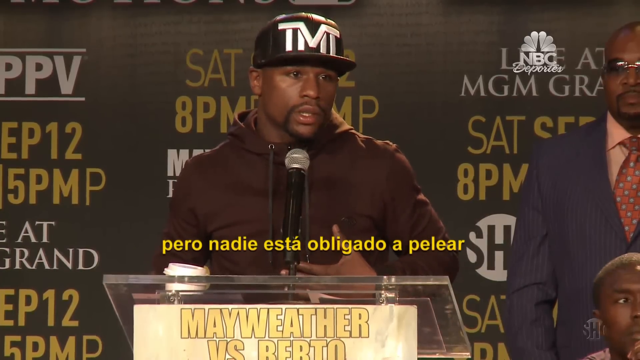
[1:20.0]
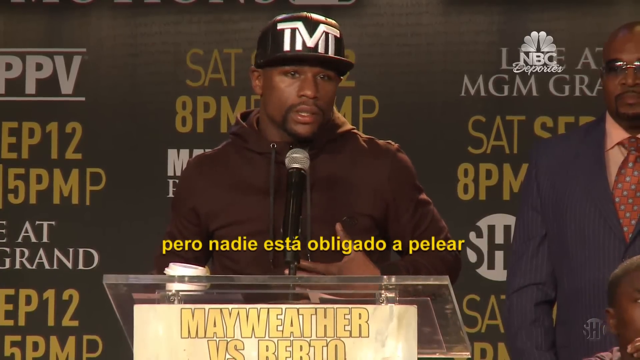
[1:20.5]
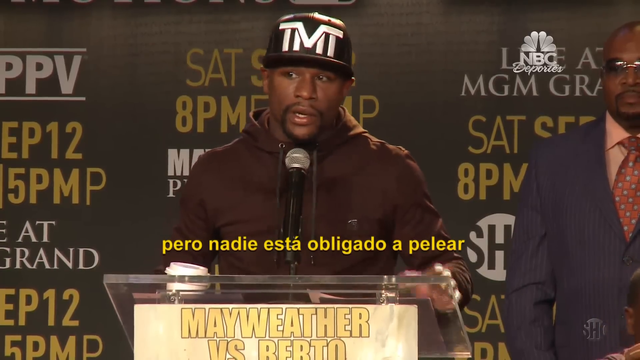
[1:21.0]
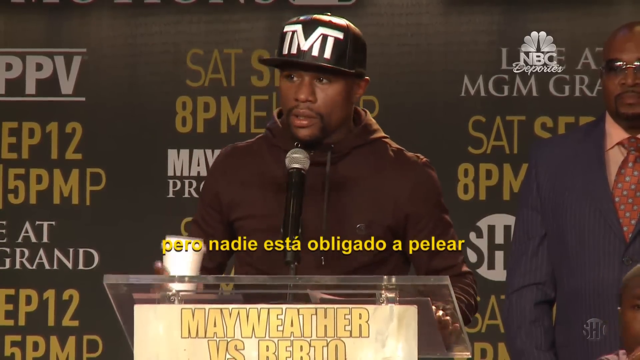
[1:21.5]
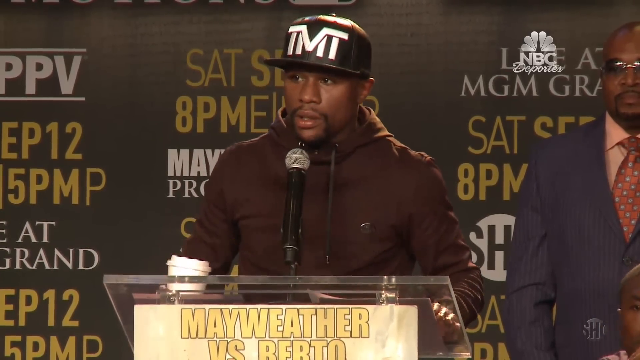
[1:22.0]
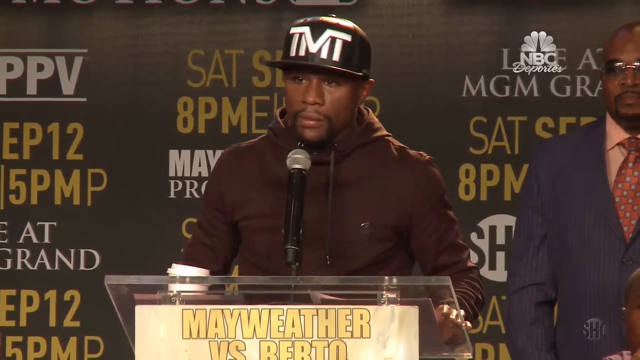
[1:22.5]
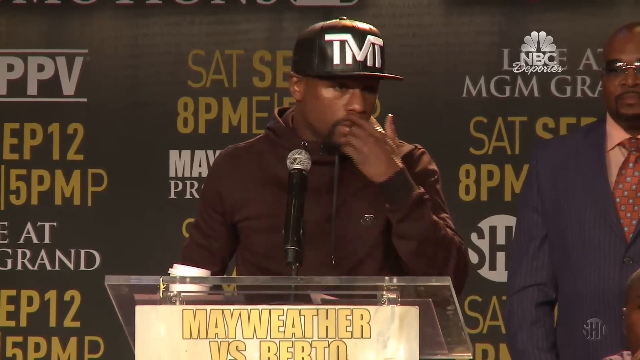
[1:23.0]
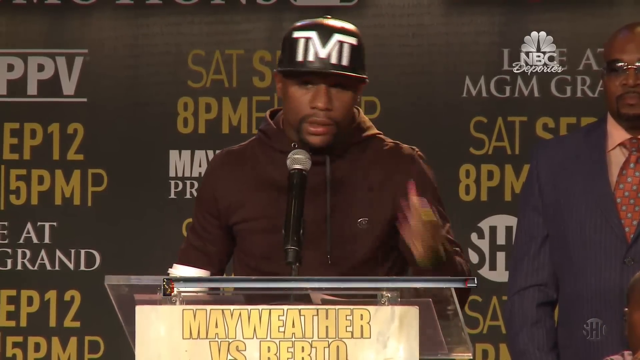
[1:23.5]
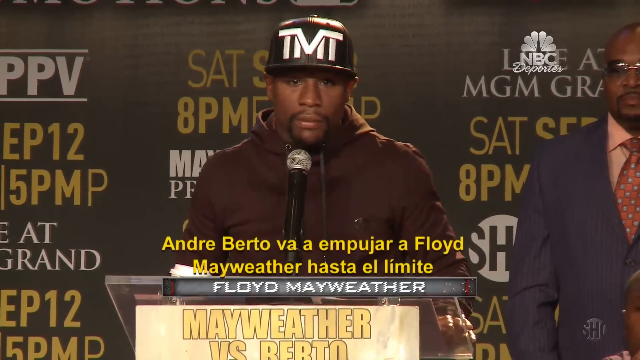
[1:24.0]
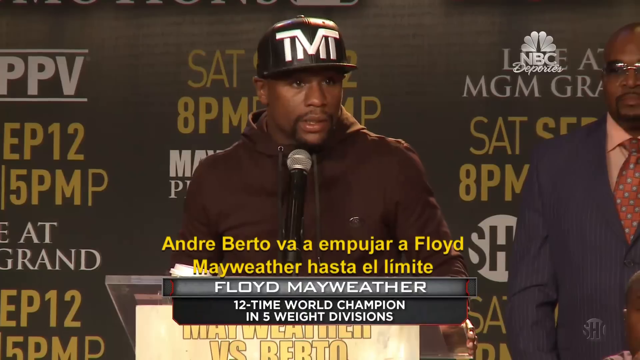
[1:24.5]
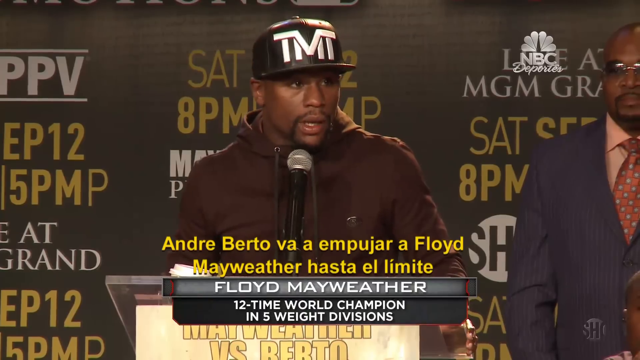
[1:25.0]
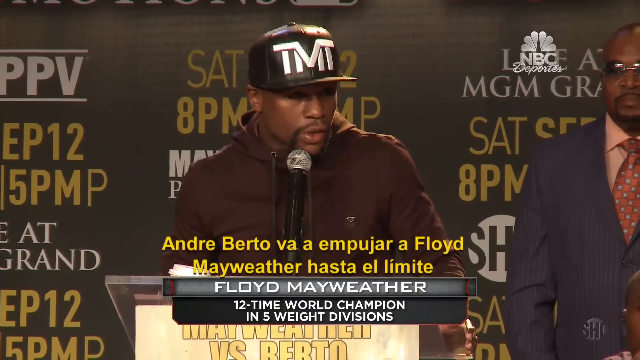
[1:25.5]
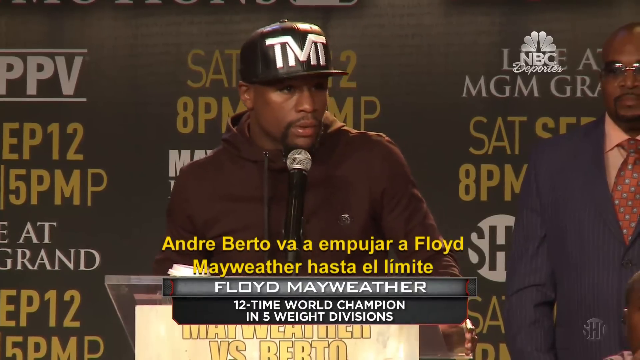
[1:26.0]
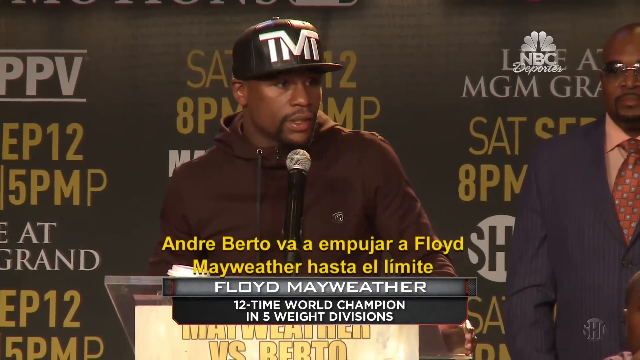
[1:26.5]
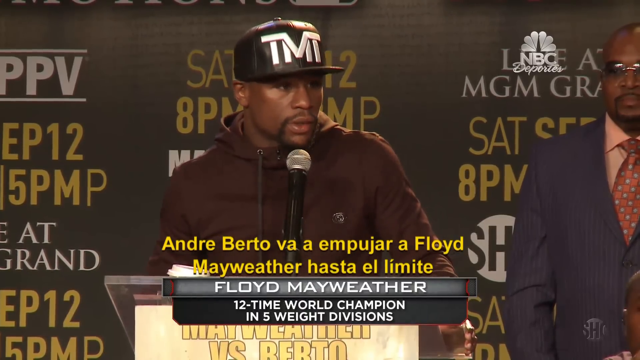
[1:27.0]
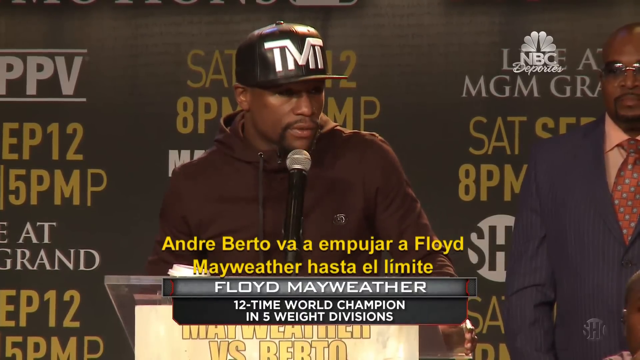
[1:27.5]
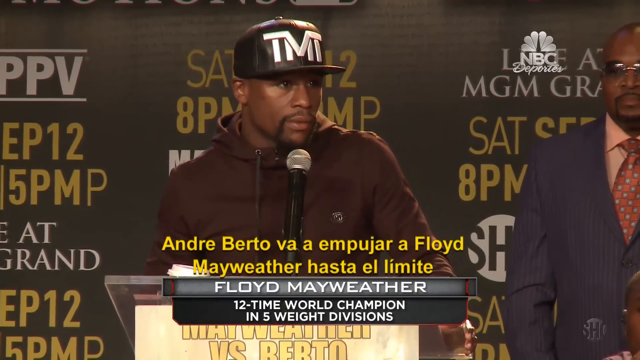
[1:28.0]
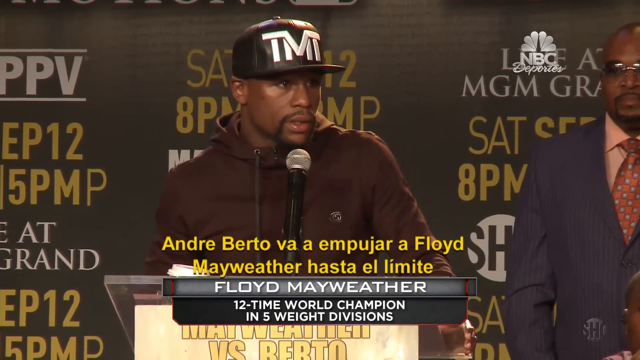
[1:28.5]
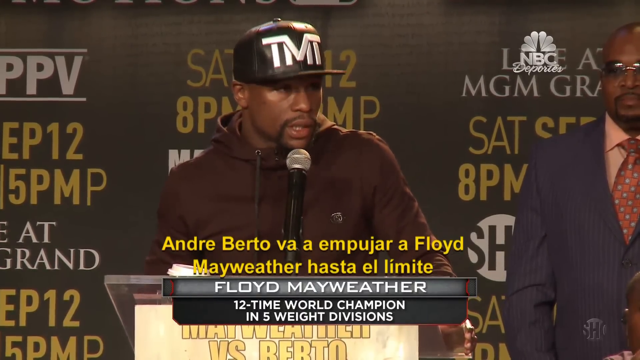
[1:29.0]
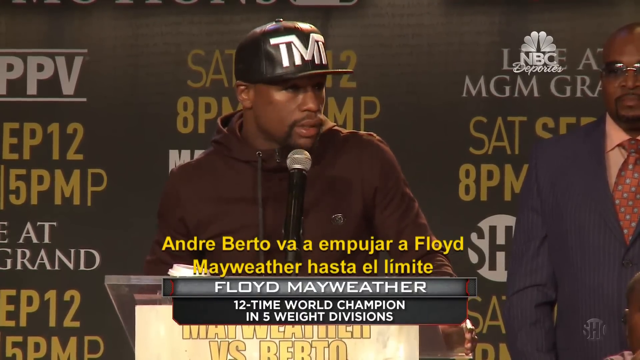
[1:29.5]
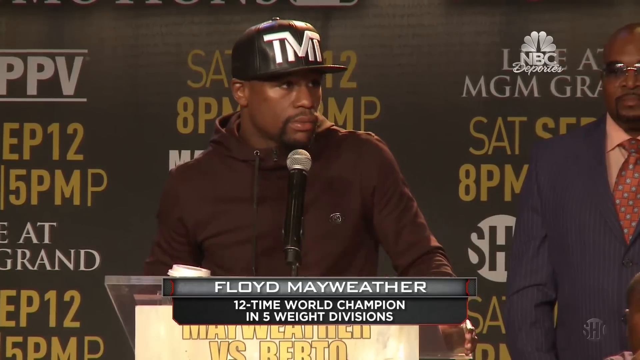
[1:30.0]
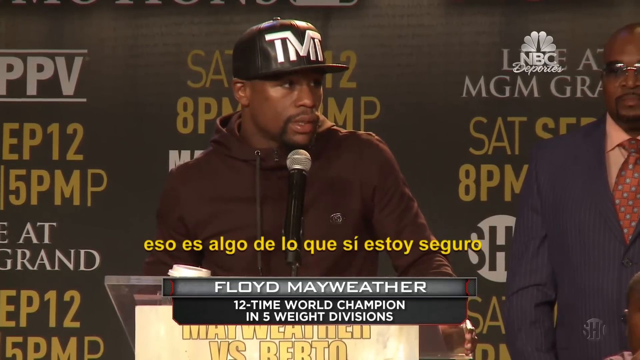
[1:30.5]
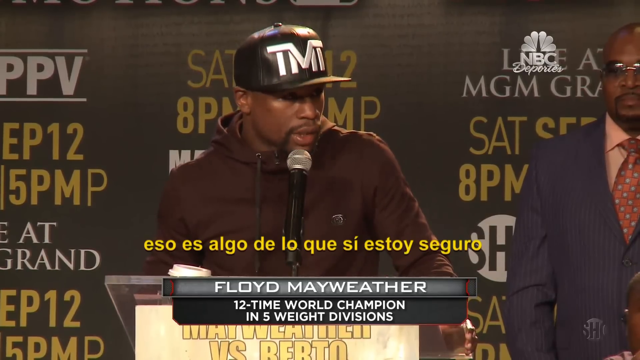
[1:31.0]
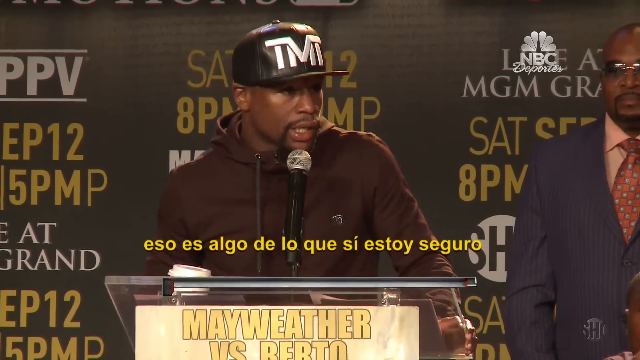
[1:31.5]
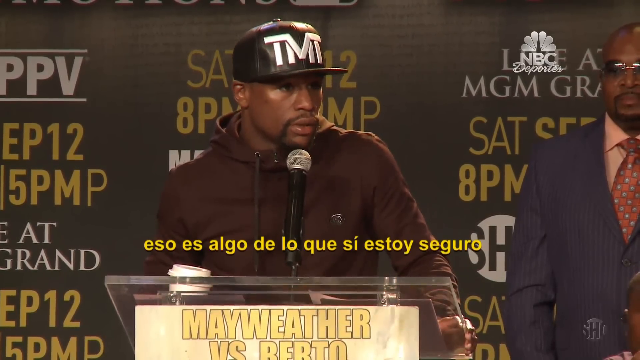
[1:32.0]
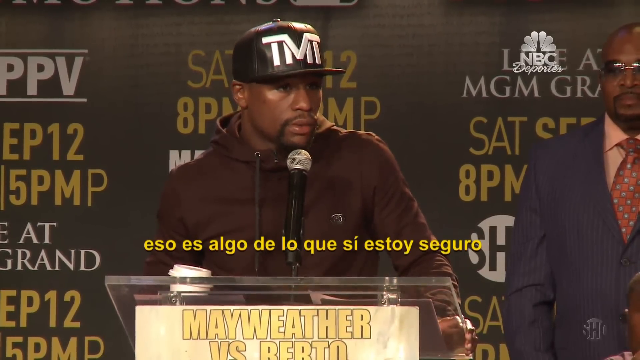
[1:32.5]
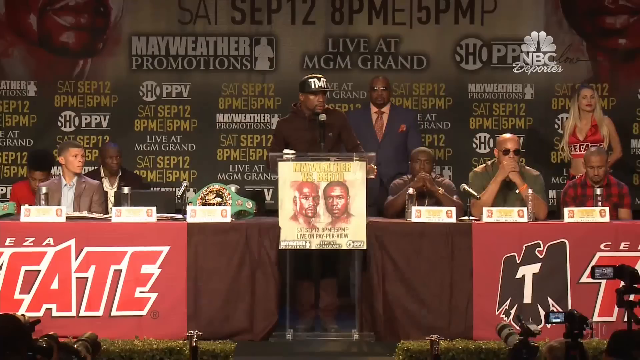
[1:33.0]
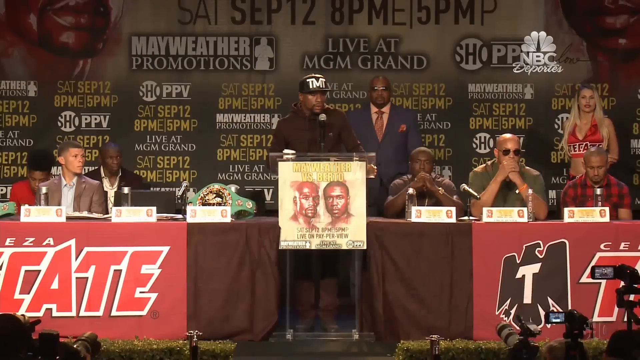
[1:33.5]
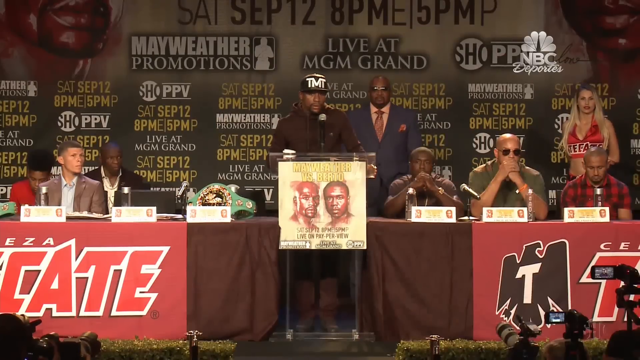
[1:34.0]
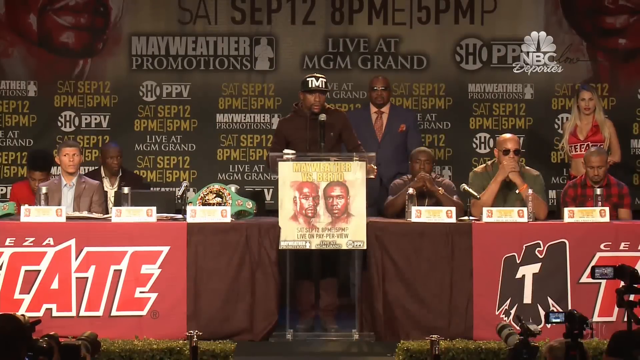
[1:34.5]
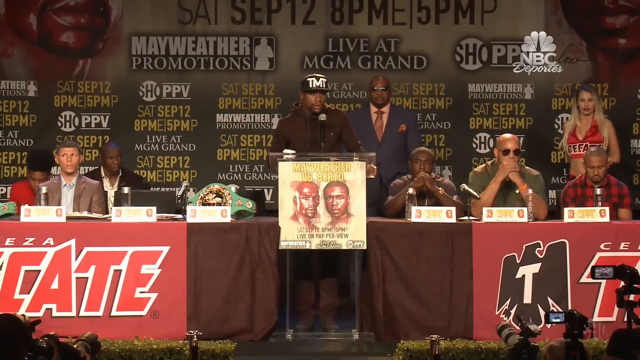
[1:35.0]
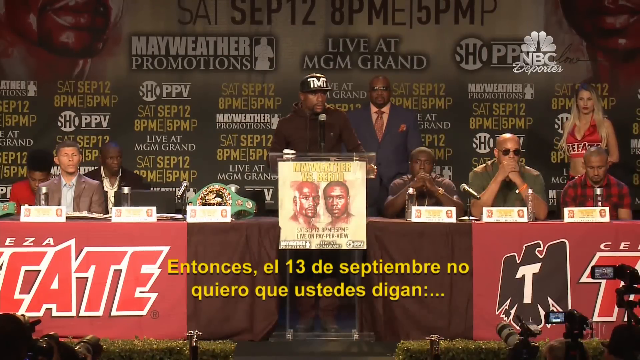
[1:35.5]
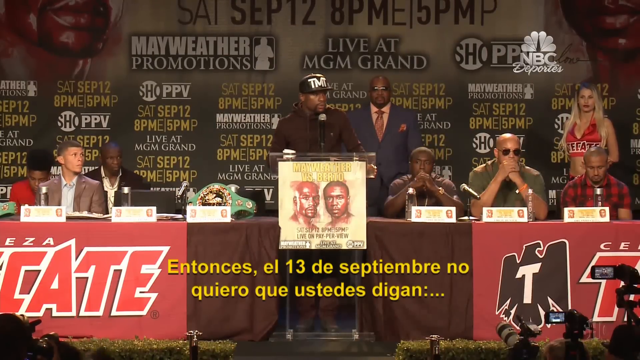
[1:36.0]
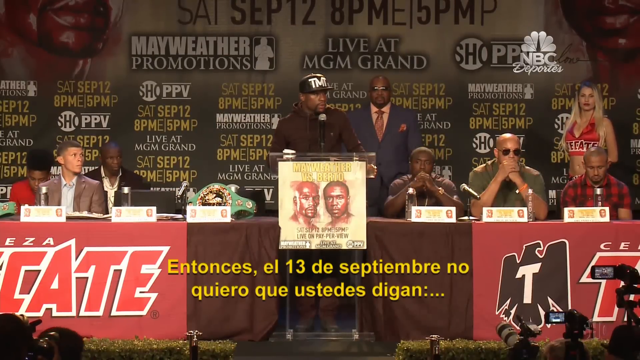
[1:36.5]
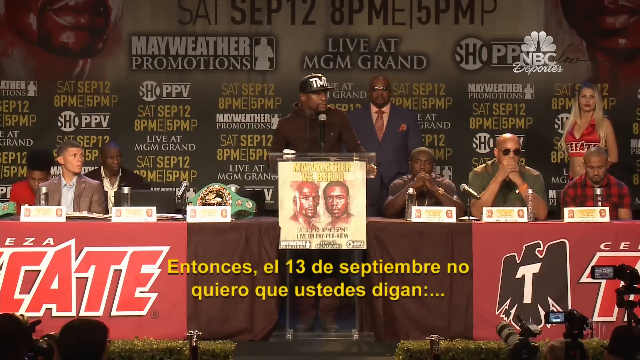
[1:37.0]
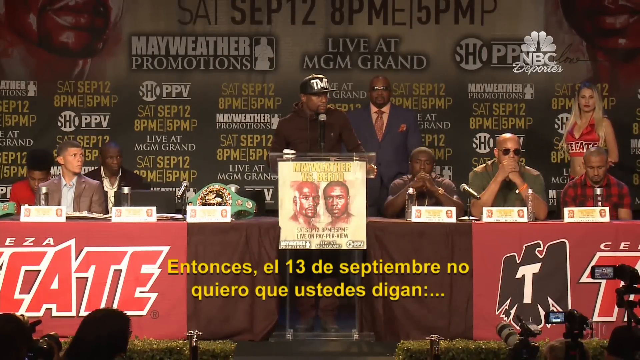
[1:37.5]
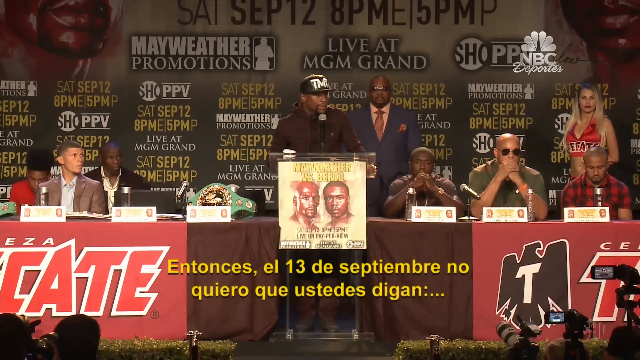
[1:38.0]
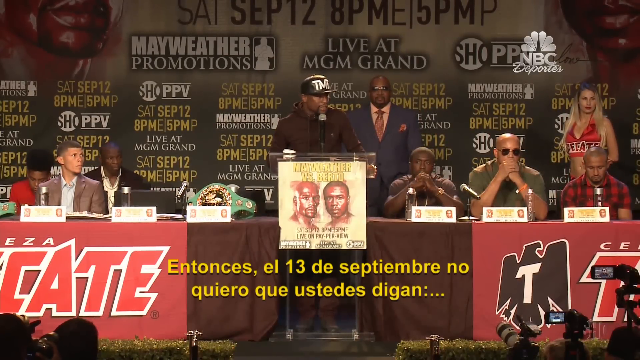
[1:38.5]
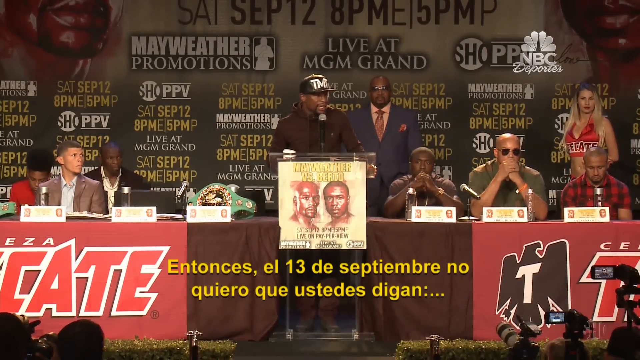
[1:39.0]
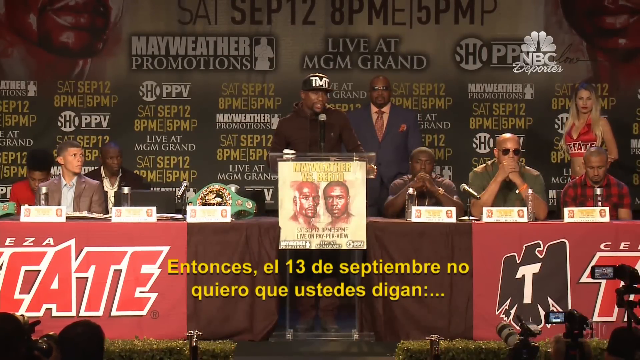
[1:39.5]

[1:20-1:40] Floyd Mayweather speaks into a microphone on a podium on a stage, appearing to speak toward his left side. He holds a cup in his right hand, only the top of which is visible as he rests it on the podium, and gestures with his left hand, at one point bringing it out to his face. A further-back view shows more of the other people on the stage: three people are on the right-hand side of the podium, and the two closest to the podium have their hands rested on the table next to the podium, covering their mouths.